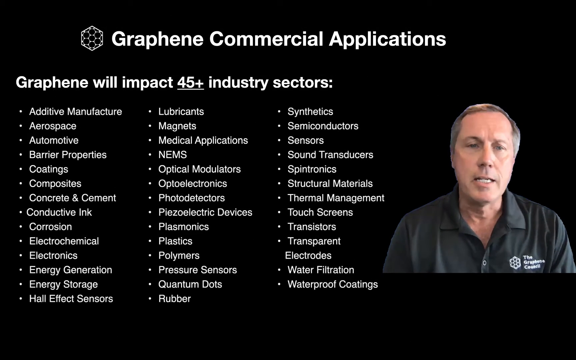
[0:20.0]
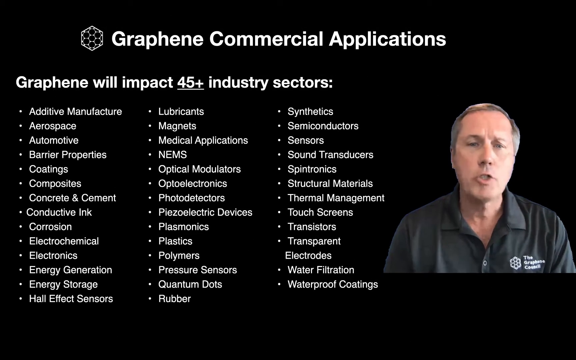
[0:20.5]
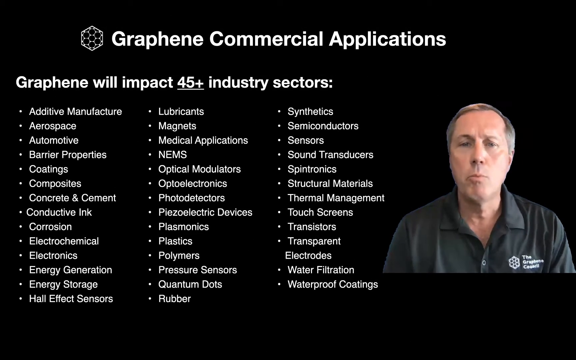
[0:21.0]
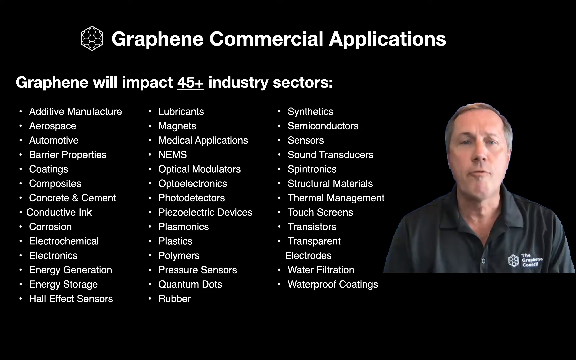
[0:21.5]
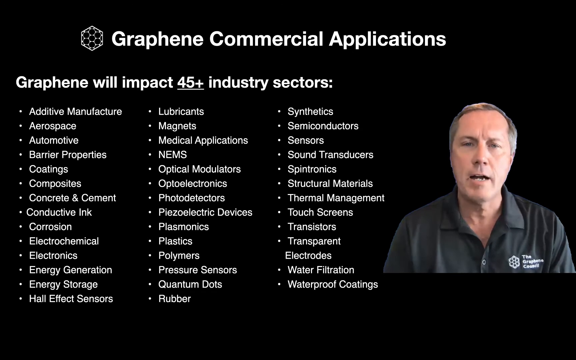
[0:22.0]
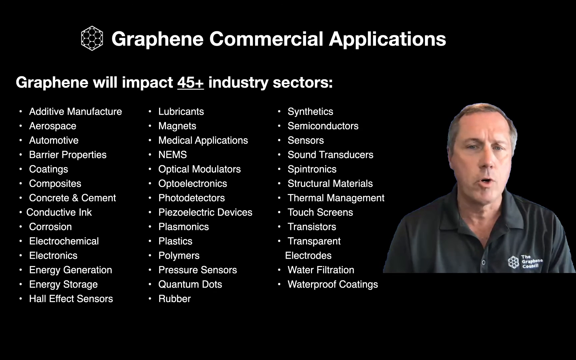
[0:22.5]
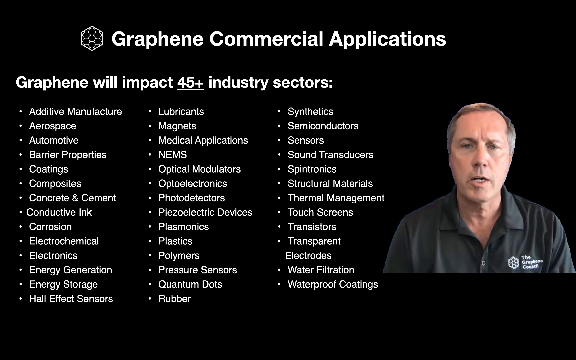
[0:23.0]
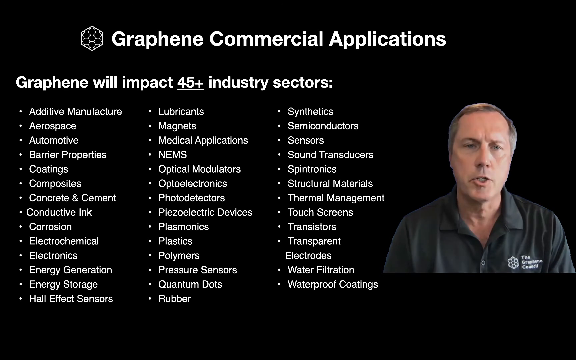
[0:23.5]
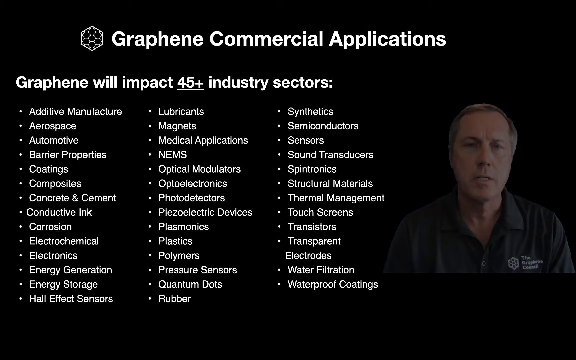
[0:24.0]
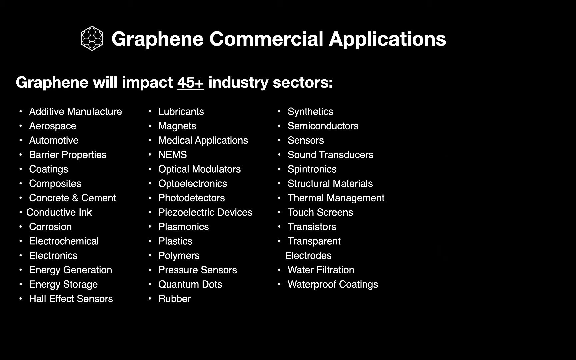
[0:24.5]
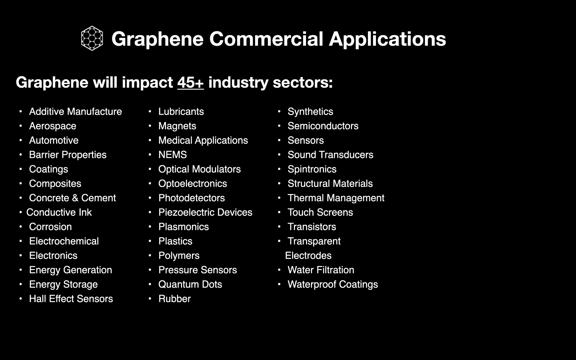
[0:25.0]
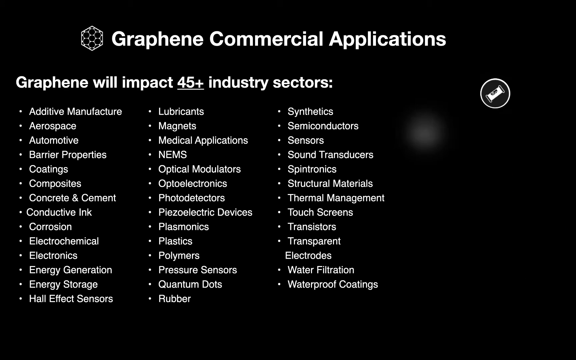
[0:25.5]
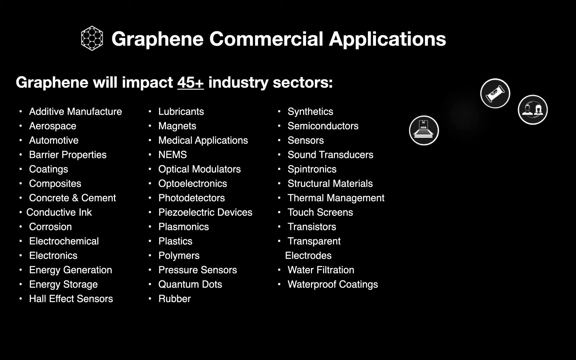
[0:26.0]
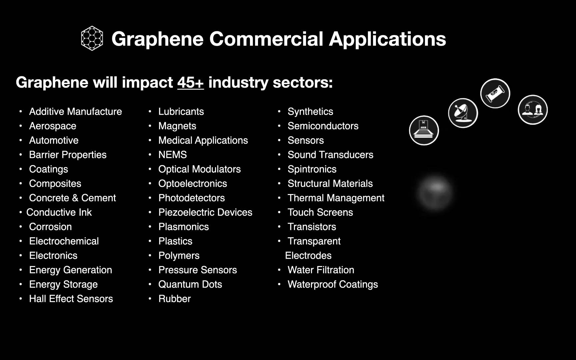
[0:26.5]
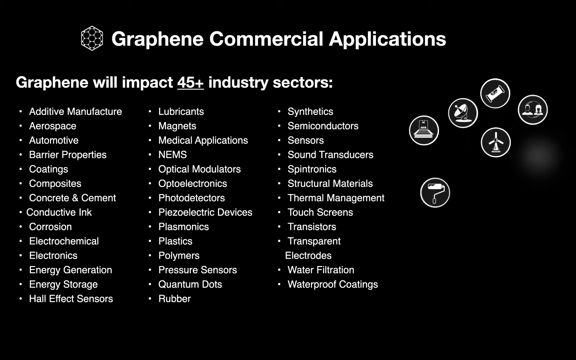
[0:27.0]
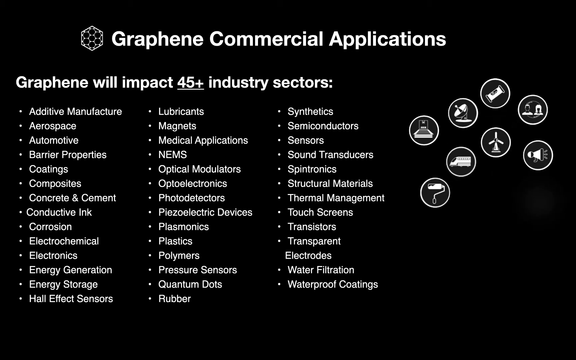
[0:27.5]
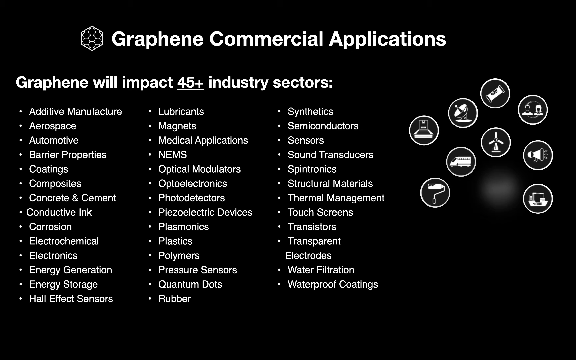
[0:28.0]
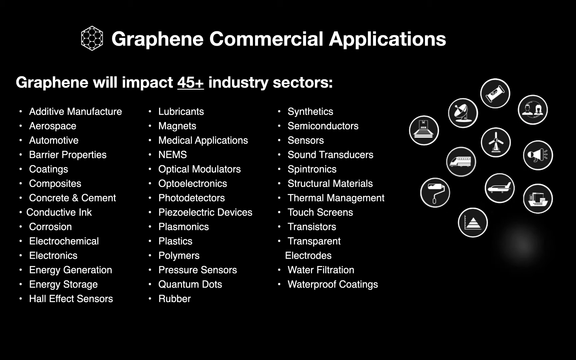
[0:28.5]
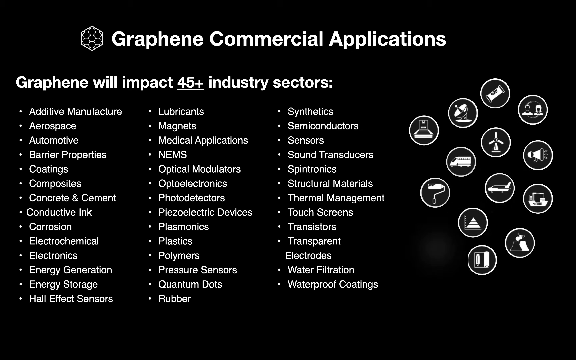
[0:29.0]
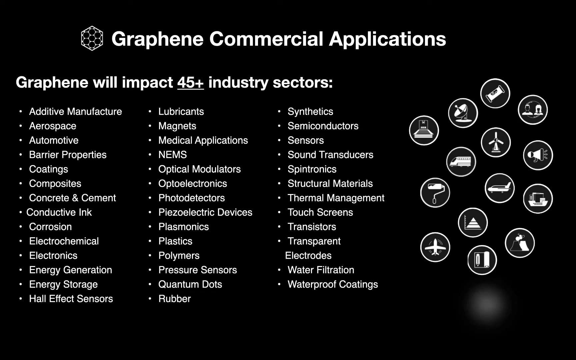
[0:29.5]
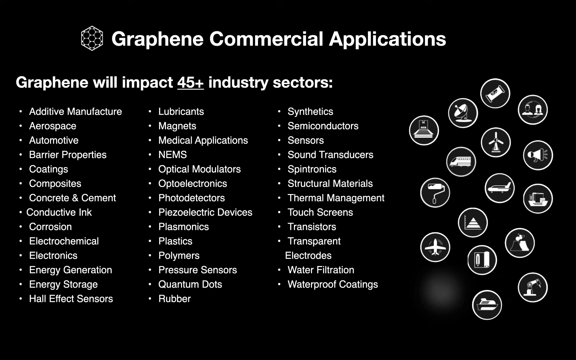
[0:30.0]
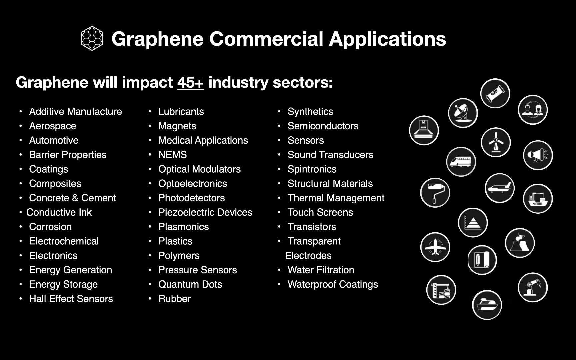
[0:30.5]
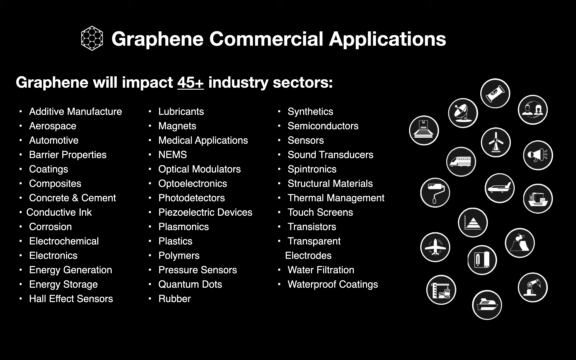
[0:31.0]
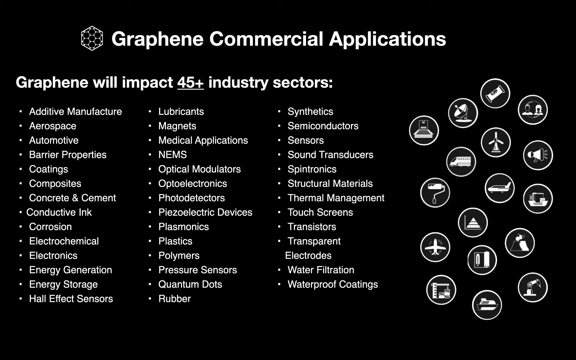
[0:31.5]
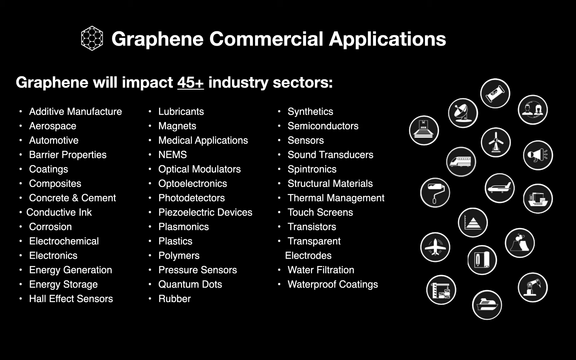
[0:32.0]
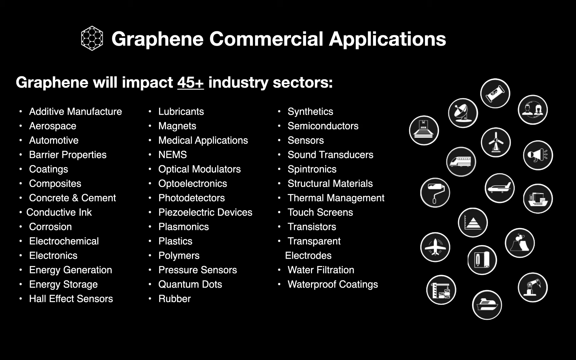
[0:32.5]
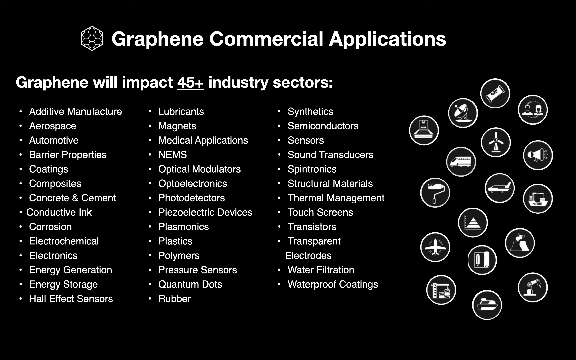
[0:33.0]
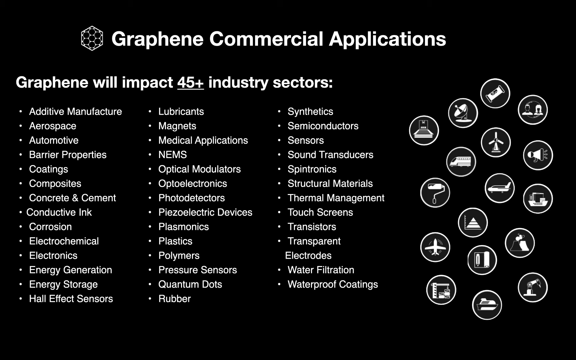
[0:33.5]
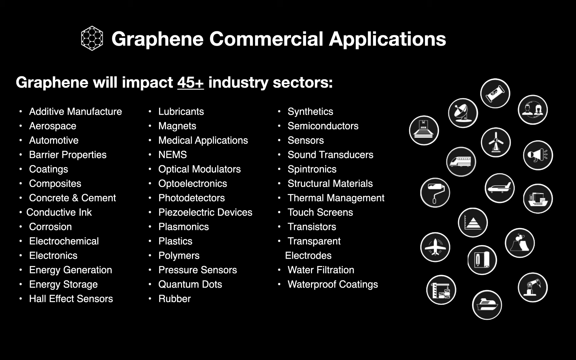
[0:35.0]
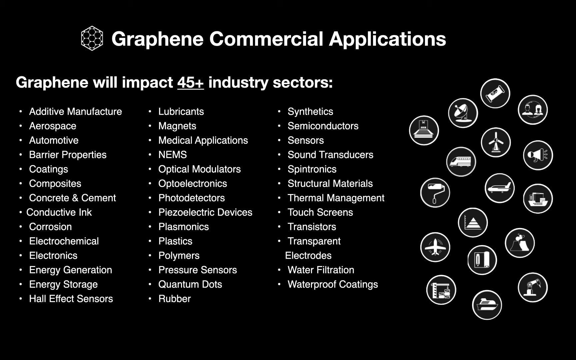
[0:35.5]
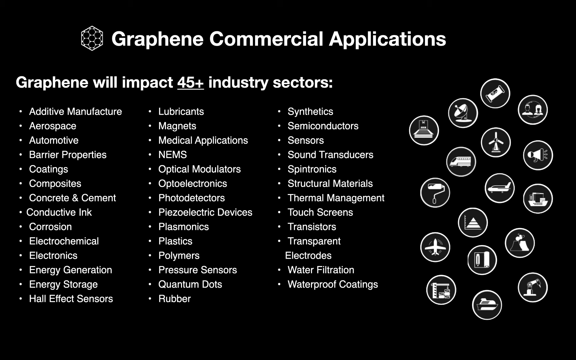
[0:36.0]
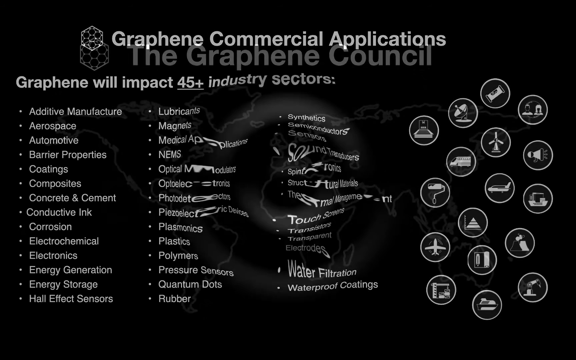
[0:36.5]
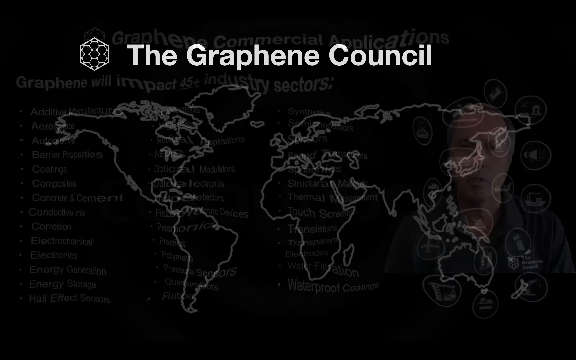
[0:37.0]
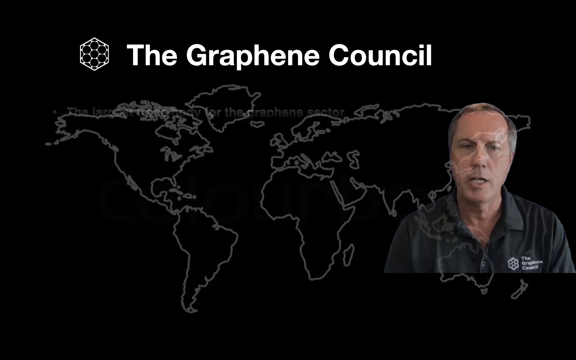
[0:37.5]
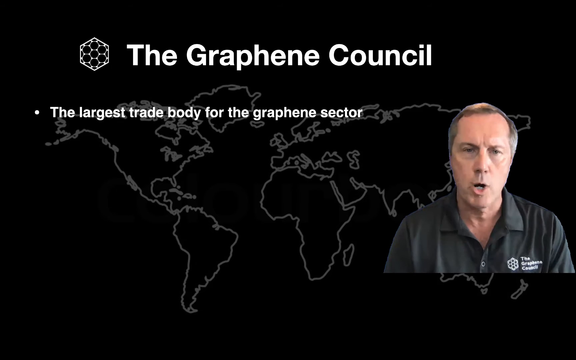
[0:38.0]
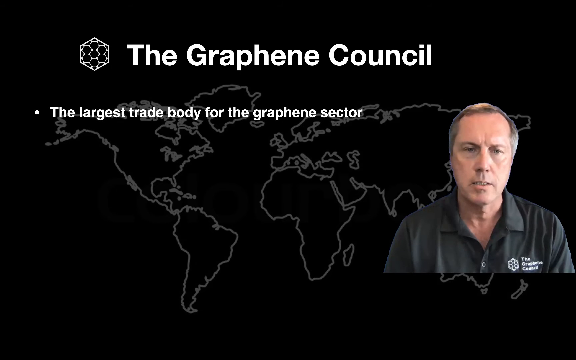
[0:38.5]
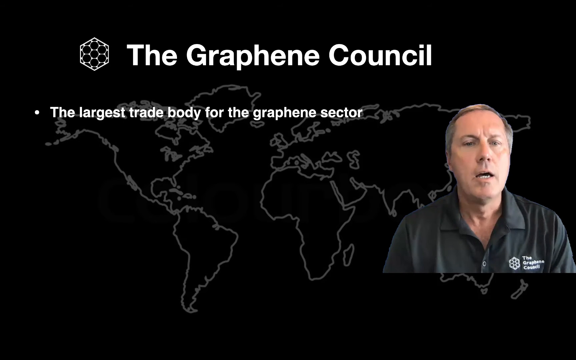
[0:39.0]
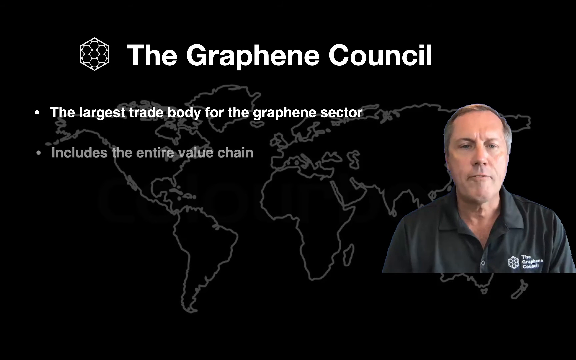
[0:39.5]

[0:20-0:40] Industry sectors appear in three bullet-pointed columns, including additive manufacturing, aerospace, automotive and spintronics, listed alphabetically from A through W. "45 plus" is underlined for emphasis. Under the heading "graphene commercial applications" and the line "graphene will impact 45 plus," the slide fades in circular clipart images scattered on the right side, including a satellite dish, a beaker of some kind, painting, a loudspeaker and airplanes. The man keeps talking. A bubble transition then leads back to him, now almost in the background, with a picture of what looks like a globe laid out flat showing the United States, Africa and the other continents. Two bullet points read "the largest trade body for the graphene sector" and "including the entire value chain."